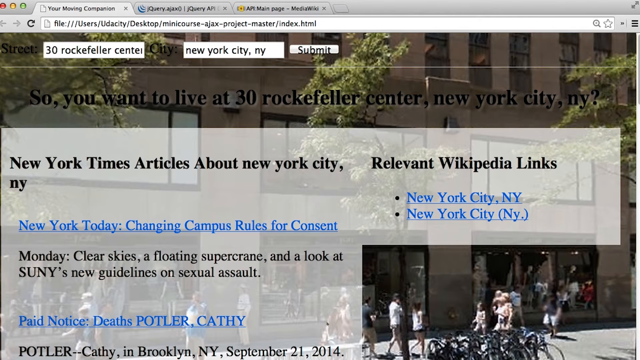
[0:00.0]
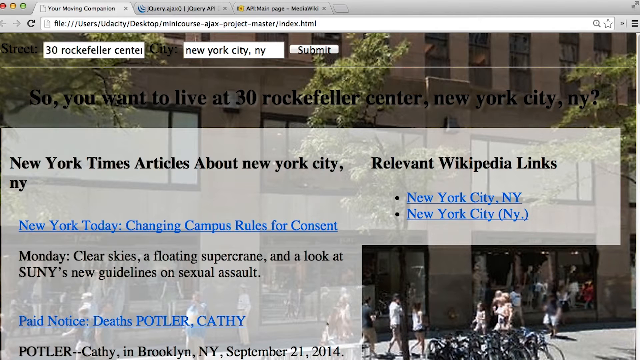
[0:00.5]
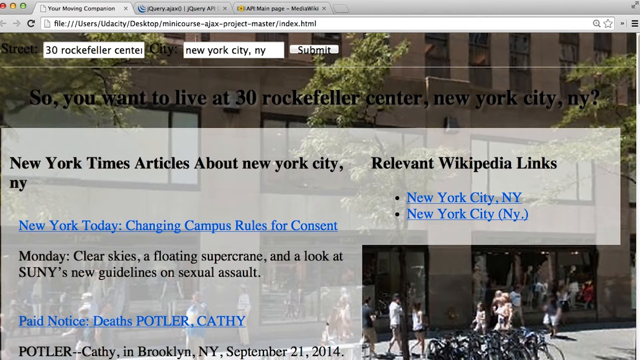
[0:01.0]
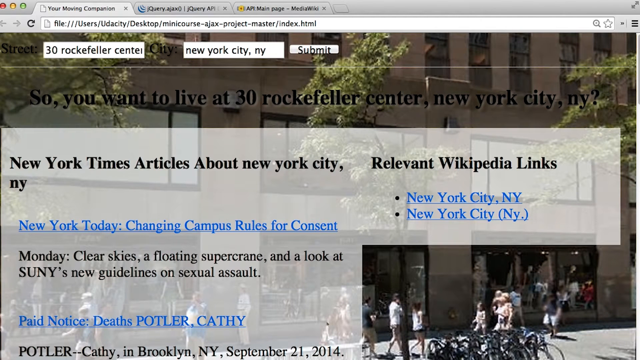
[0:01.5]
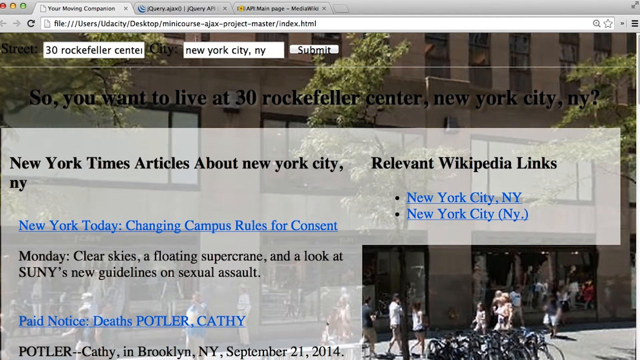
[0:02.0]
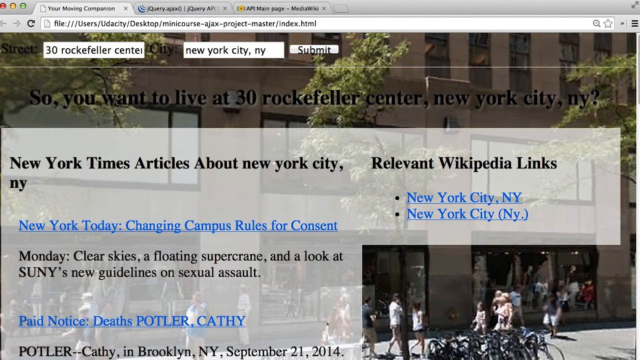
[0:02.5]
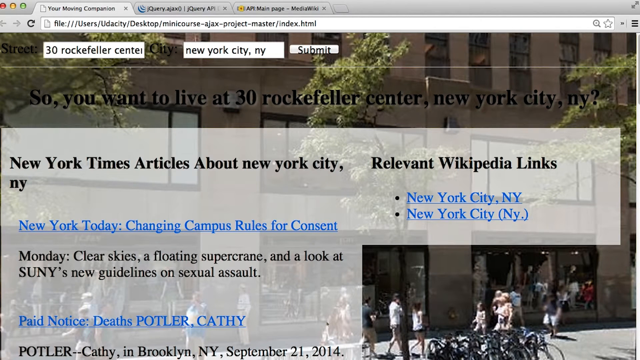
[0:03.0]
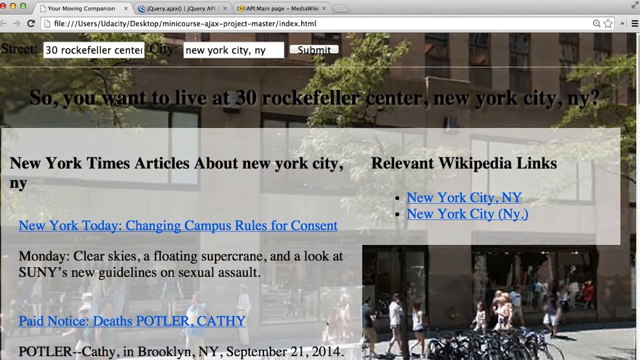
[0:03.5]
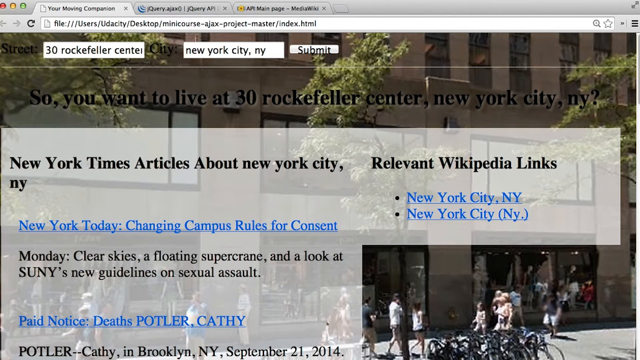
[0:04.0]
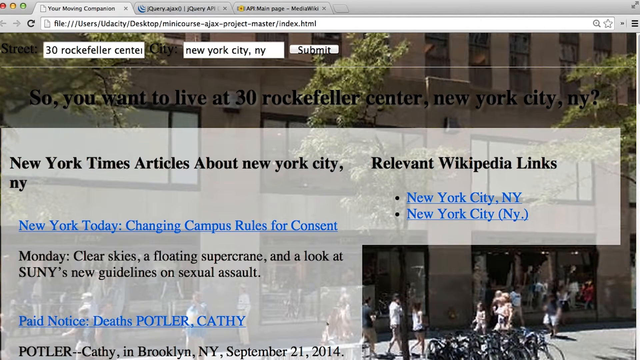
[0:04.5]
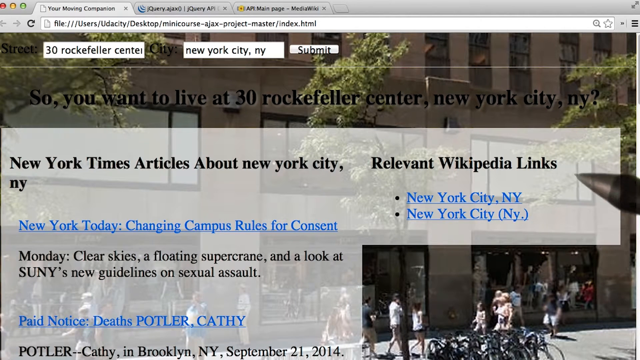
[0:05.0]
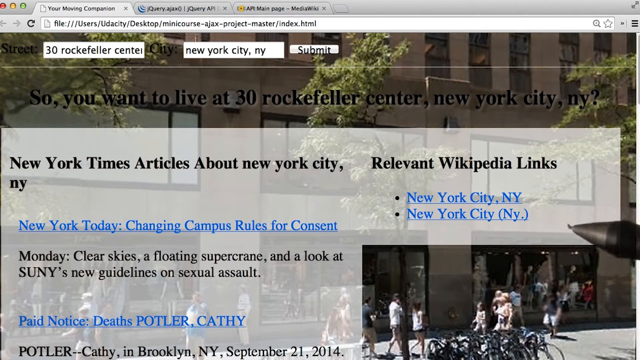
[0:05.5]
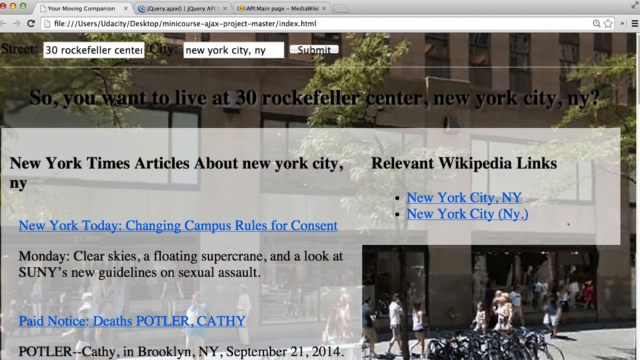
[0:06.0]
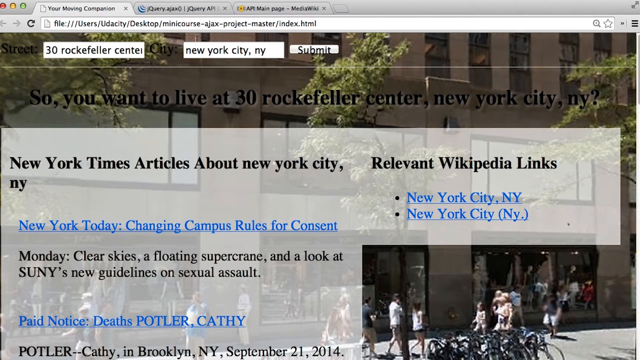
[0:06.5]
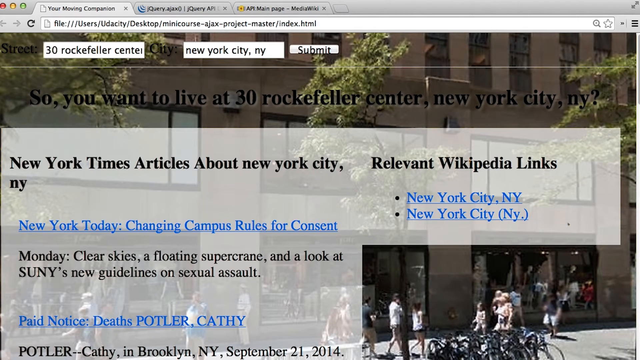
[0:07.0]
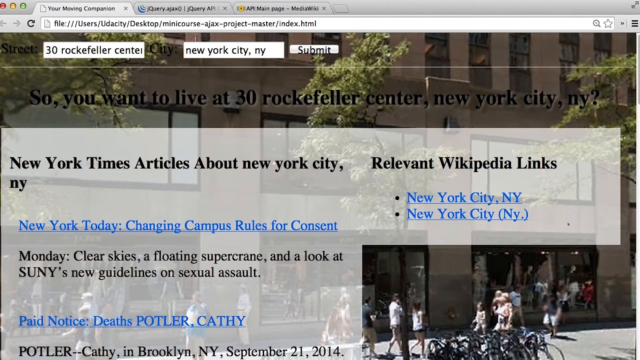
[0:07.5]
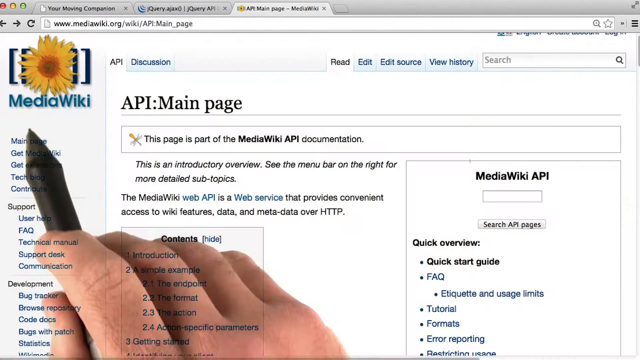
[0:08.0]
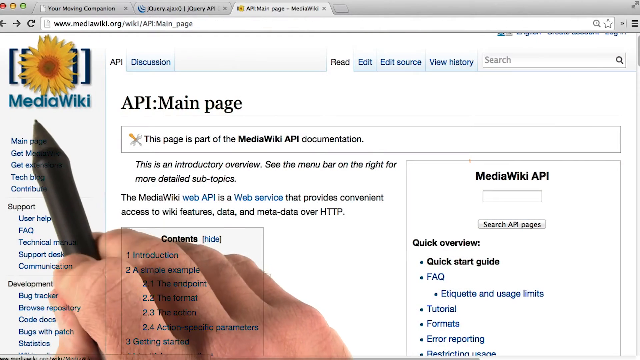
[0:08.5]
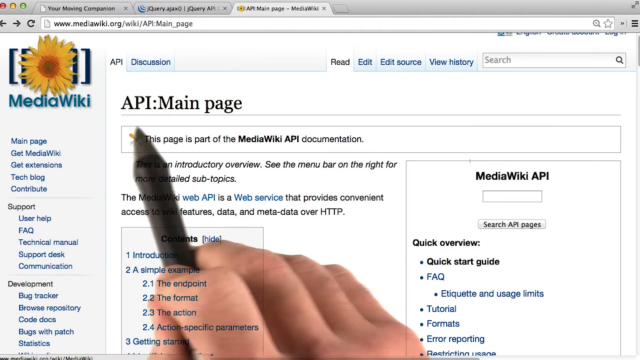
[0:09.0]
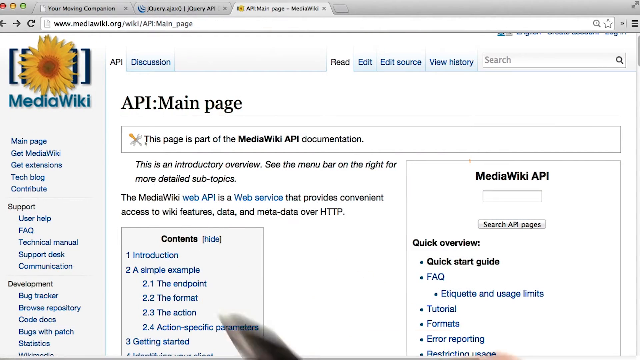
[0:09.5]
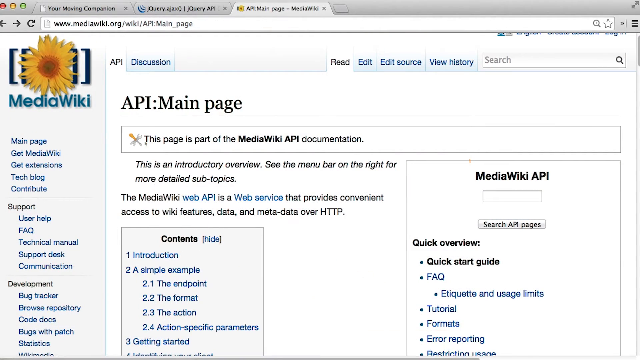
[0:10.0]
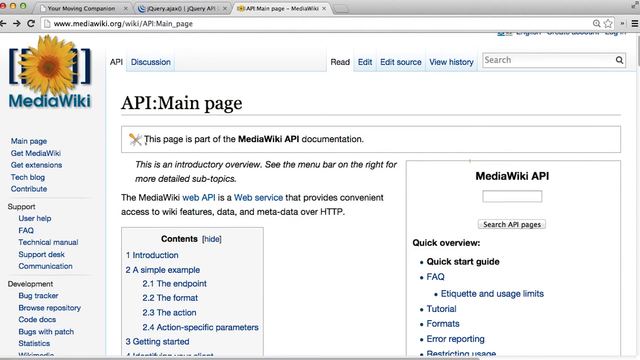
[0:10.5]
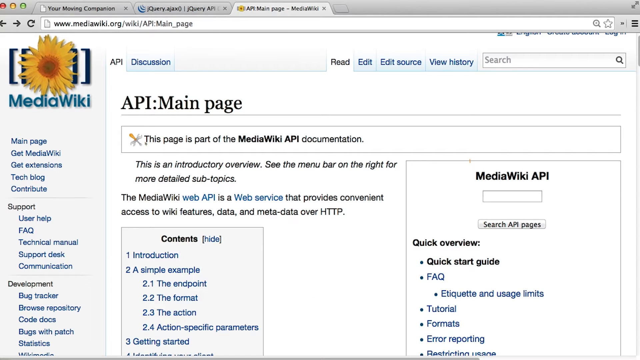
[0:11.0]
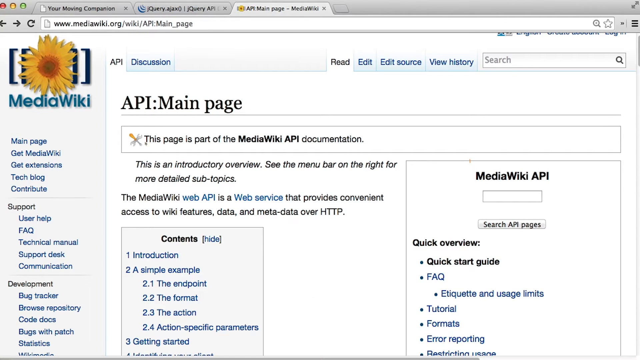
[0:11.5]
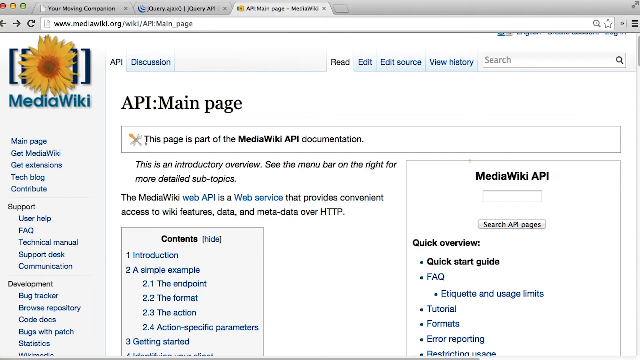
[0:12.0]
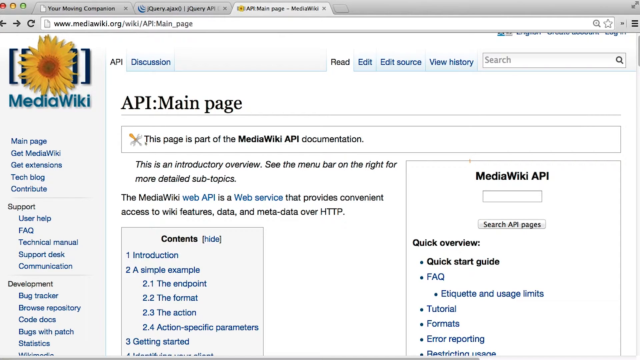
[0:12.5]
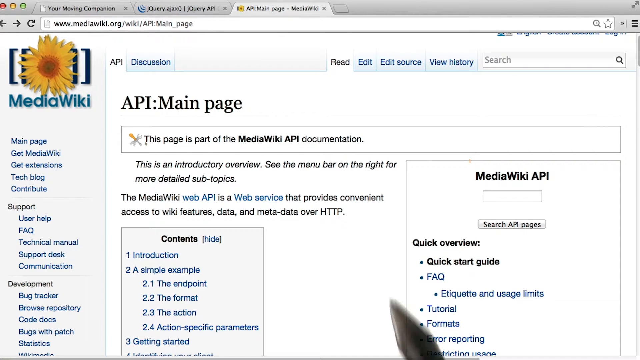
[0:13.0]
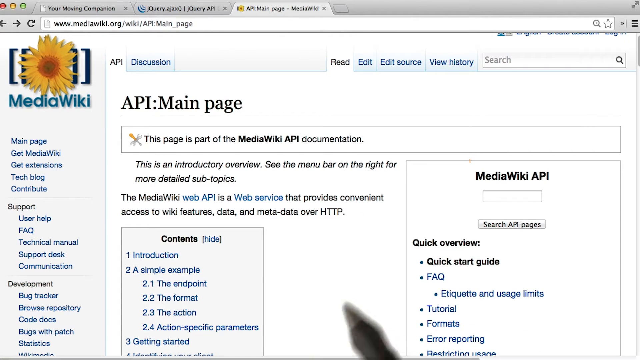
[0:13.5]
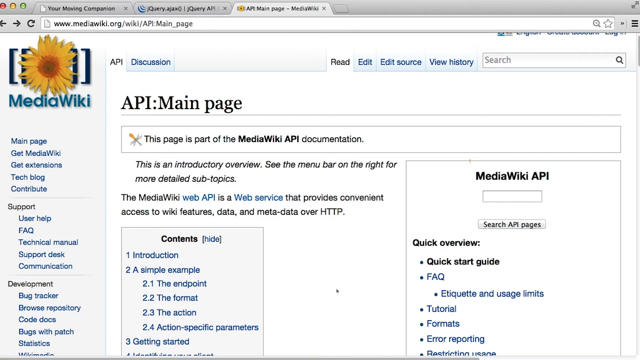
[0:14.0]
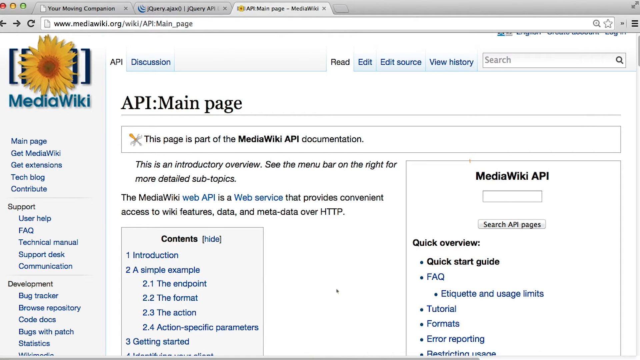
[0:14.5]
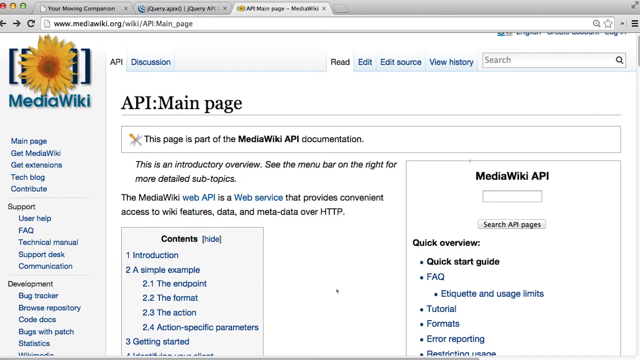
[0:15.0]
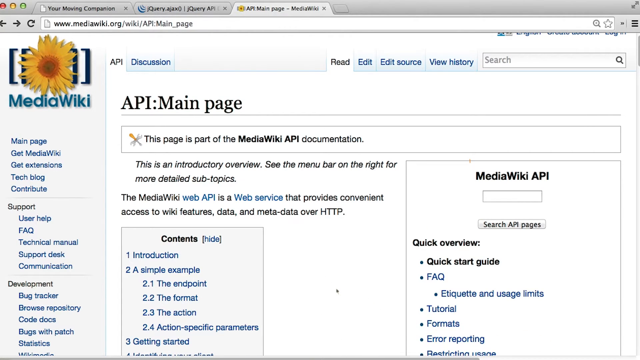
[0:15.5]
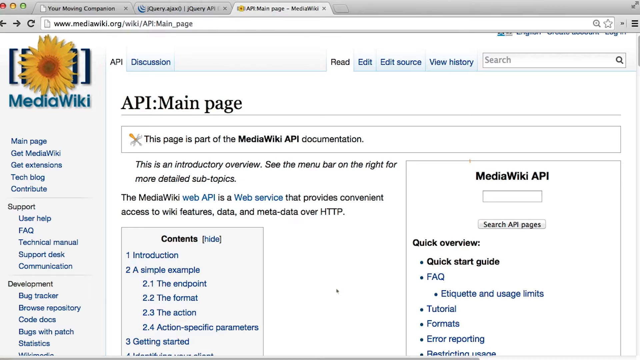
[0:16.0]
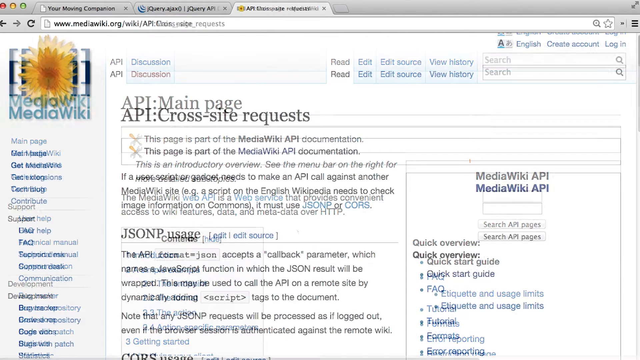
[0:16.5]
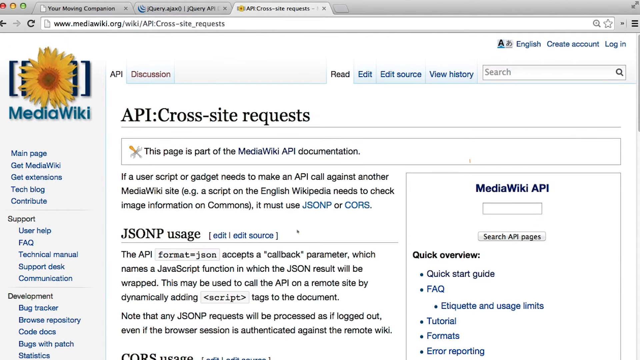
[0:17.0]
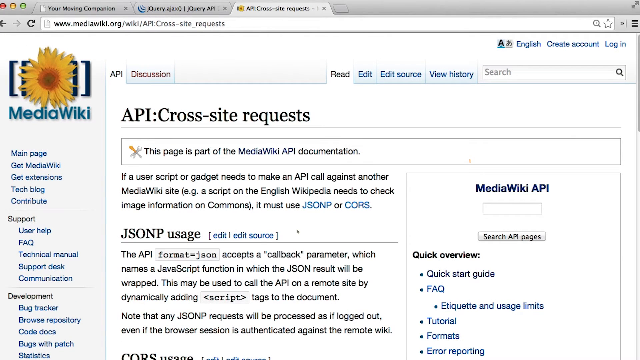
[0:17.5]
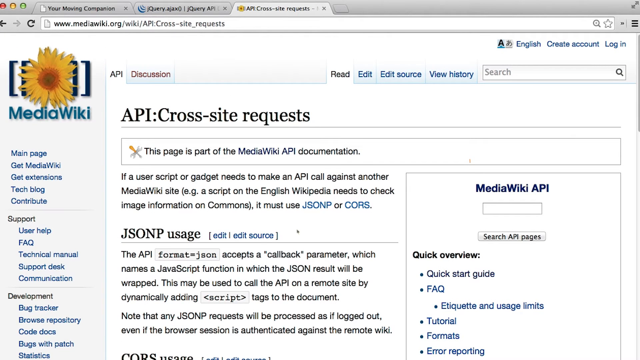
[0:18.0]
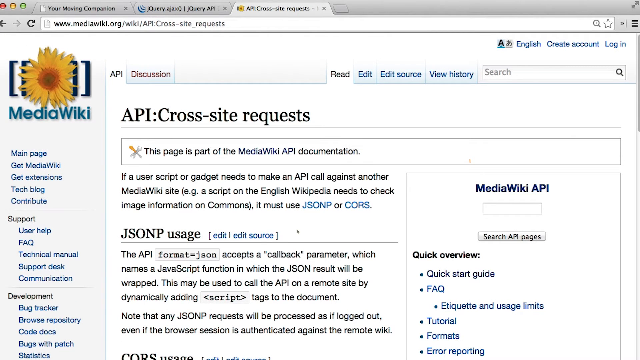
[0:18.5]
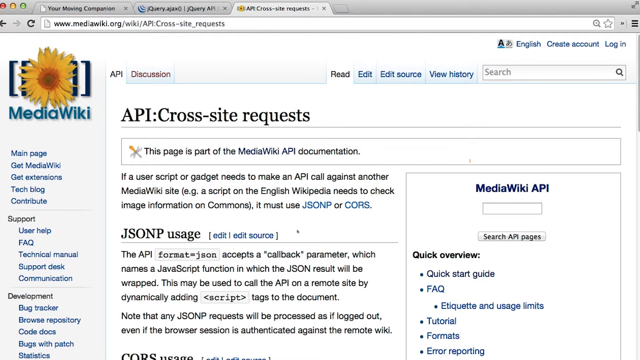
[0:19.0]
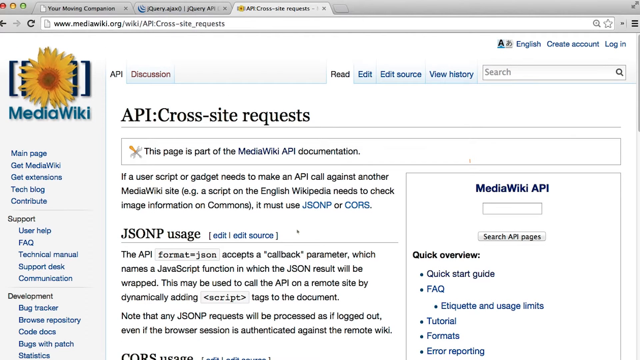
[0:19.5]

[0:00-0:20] A building is shown with a pop-up in front of it, with text referring to New York City, New York. Somebody pokes a pen or a pencil in from the side. The view turns to a MediaWiki page, and a person brings in a pencil with their right hand, kind of pokes around with it, and then brings it back out. The building is in New York City, and text reads "so you want to live at 30 Rockefeller Center, New York." There is a clickable link for New York City, New York. The person with the pen pokes in again and apparently puts a dot on the page next to New York City. The MediaWiki page is an API cross-site request page, and then the view returns to the page about 30 Rockefeller Center, which also gives the weather forecast for Monday.